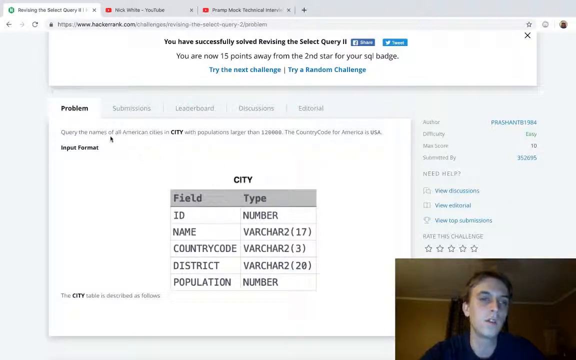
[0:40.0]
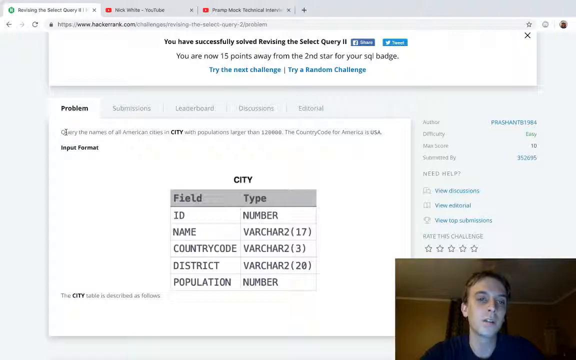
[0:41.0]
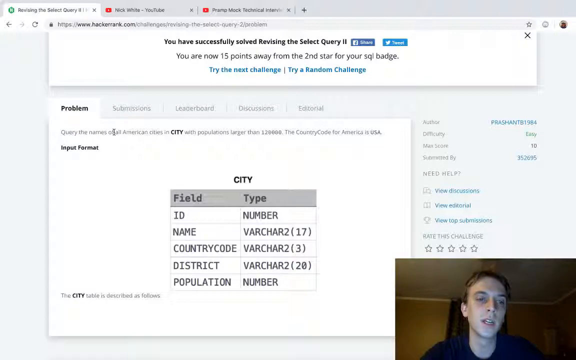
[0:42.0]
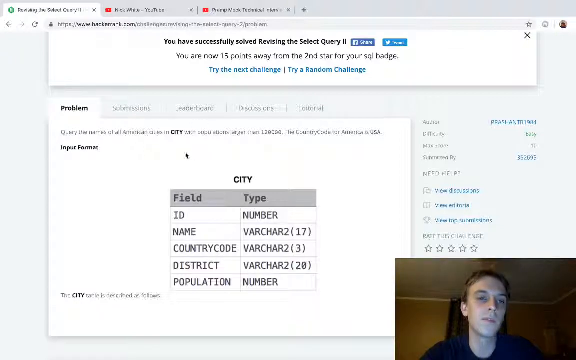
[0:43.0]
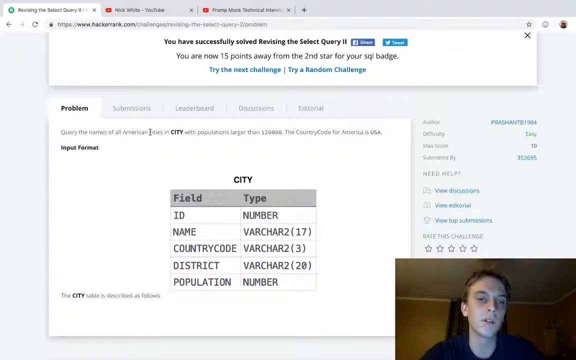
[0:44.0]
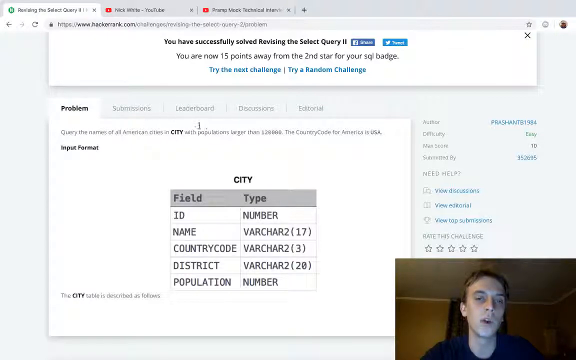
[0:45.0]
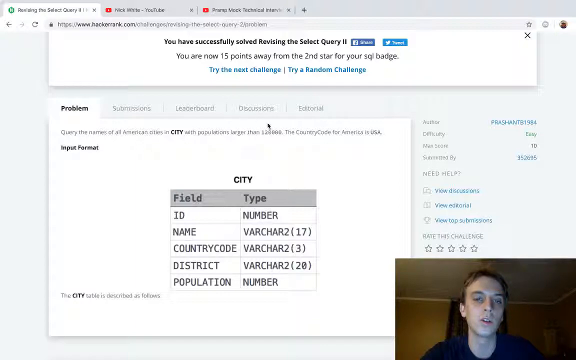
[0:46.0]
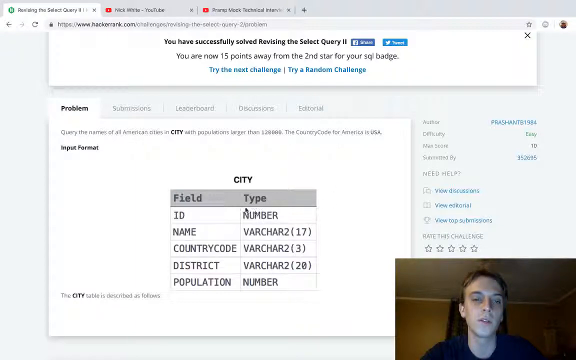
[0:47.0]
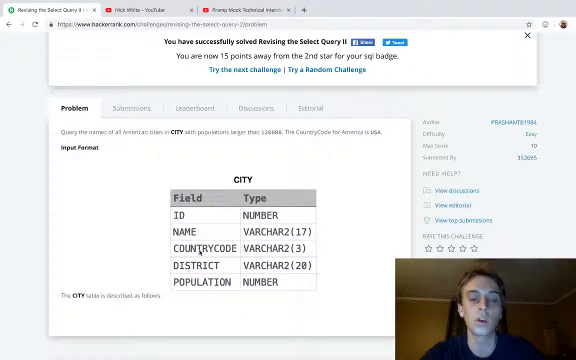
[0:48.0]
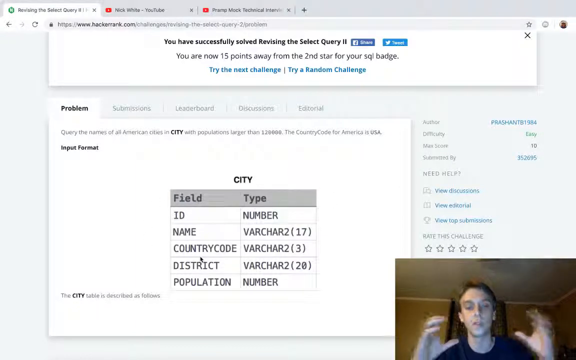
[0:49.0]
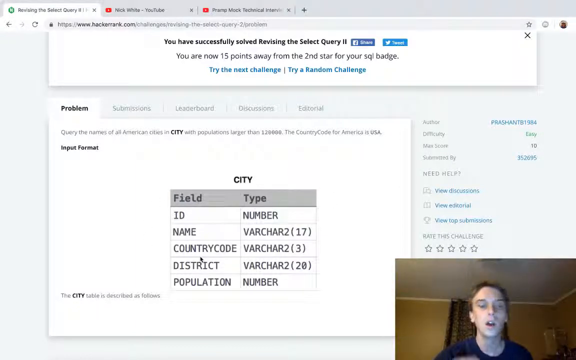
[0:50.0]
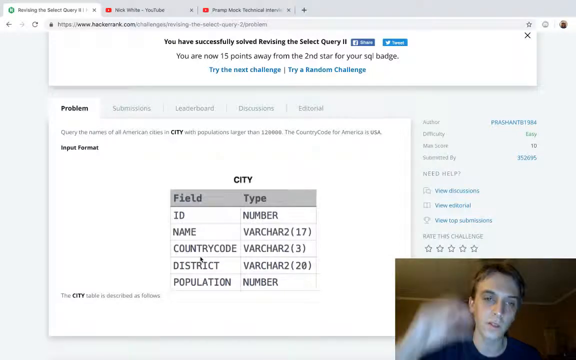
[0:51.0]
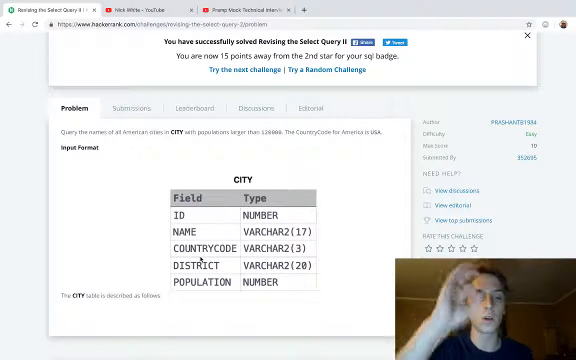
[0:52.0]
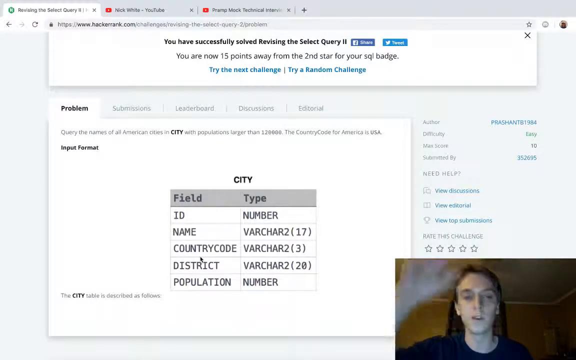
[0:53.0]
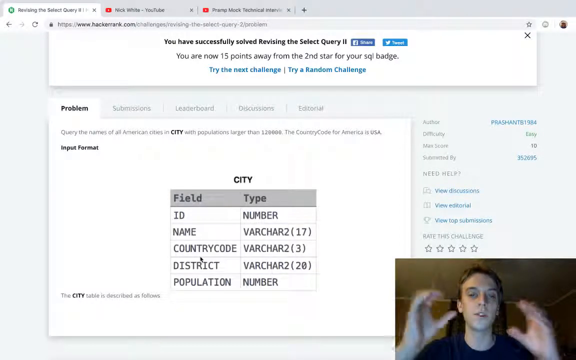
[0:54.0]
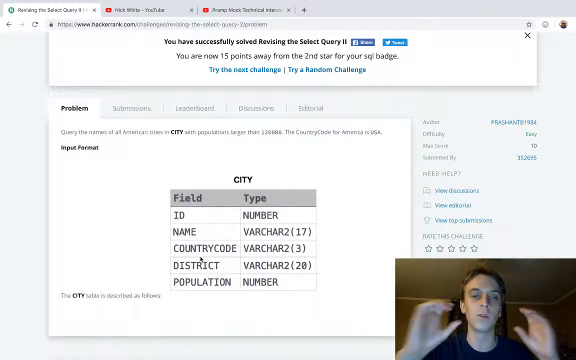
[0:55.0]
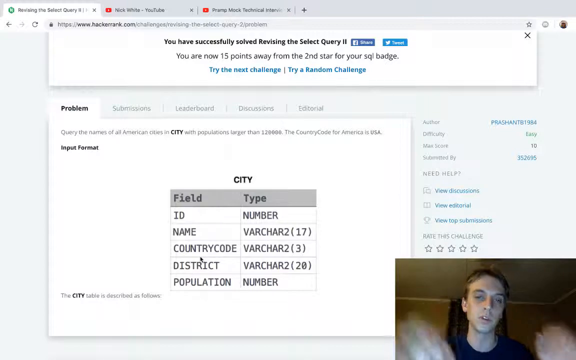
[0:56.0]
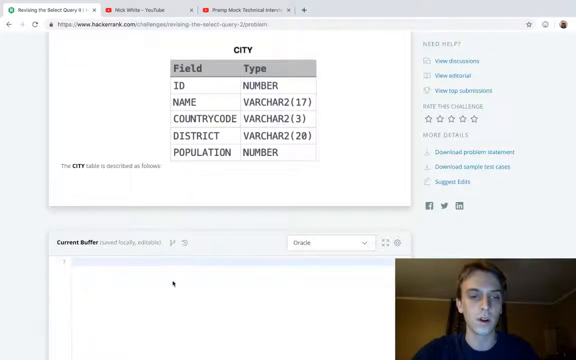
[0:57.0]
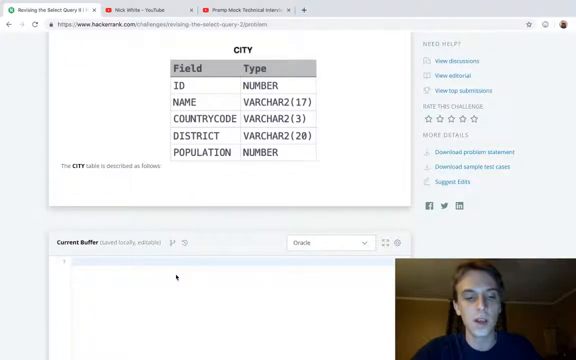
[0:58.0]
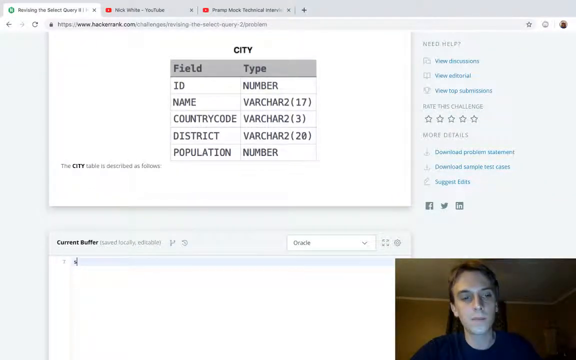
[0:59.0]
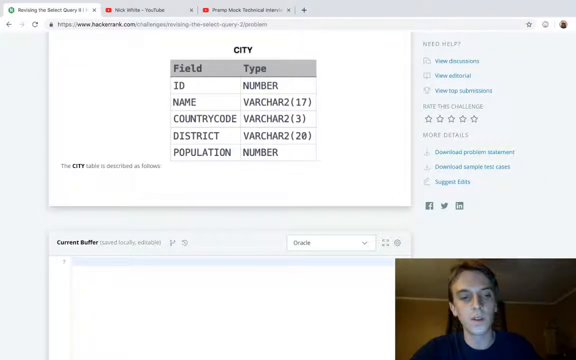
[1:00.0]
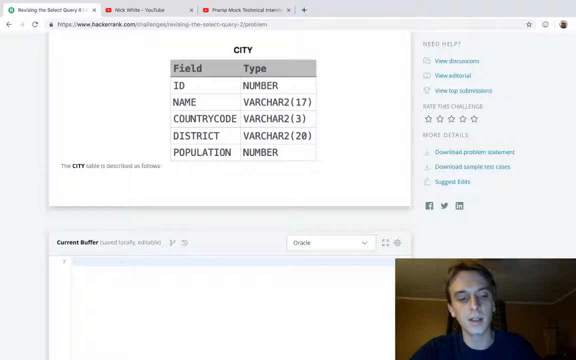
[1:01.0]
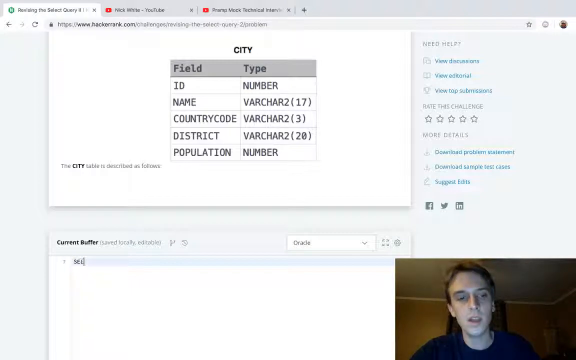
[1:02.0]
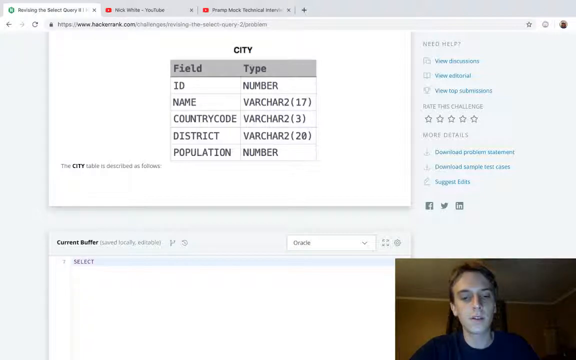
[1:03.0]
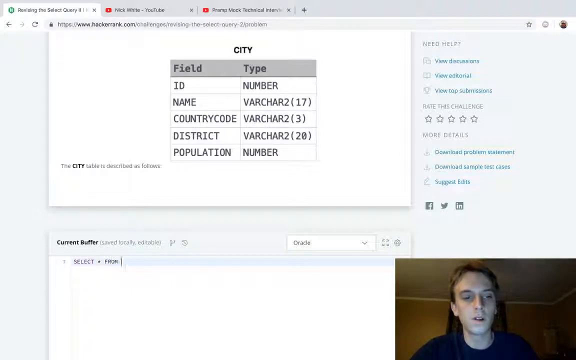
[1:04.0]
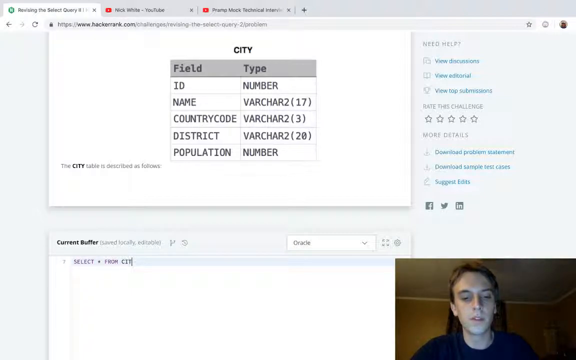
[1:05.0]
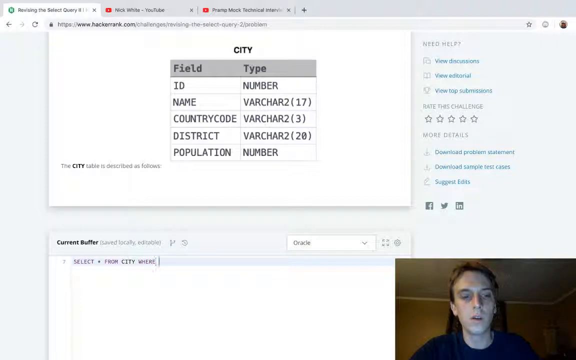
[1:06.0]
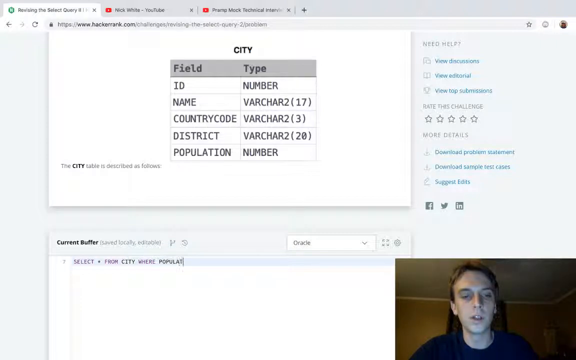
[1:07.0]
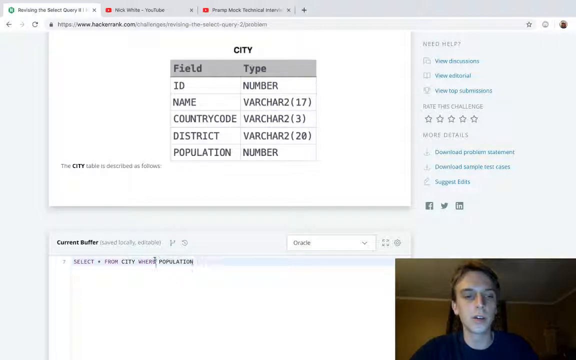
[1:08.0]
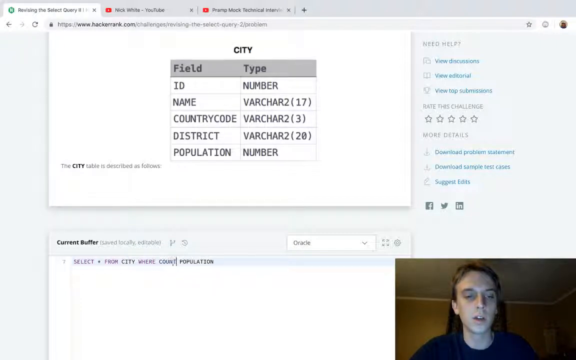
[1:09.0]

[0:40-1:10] The man keeps talking as the cursor moves around. He talks with his right hand and then with both hands. A box has a "field" section and a "type" section. Under field it says ID, name, country, code, district and population; under type it says number, VARCHAR2 (17), VARCHAR2 (3), VARCHAR2 (20), and then number beneath that. A tab says "problem", suggesting some kind of math problem or test. He still seems frustrated and talks a lot with his hands. He looks down toward the bottom and begins to type something there, but the font is small and hard to make out.